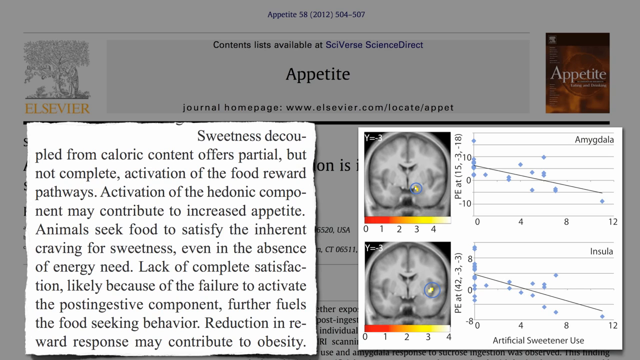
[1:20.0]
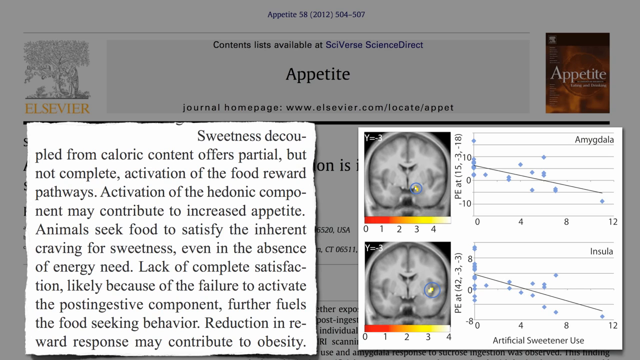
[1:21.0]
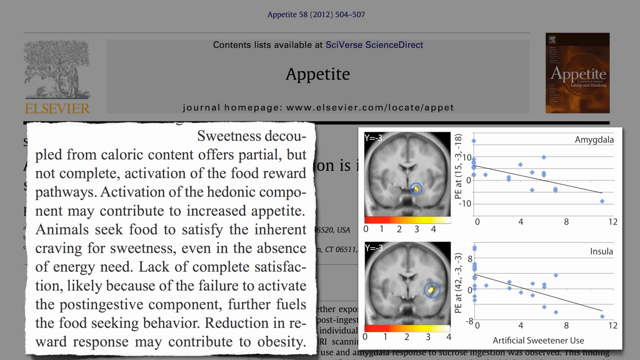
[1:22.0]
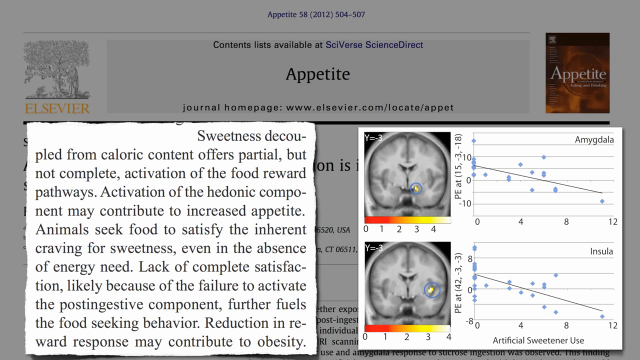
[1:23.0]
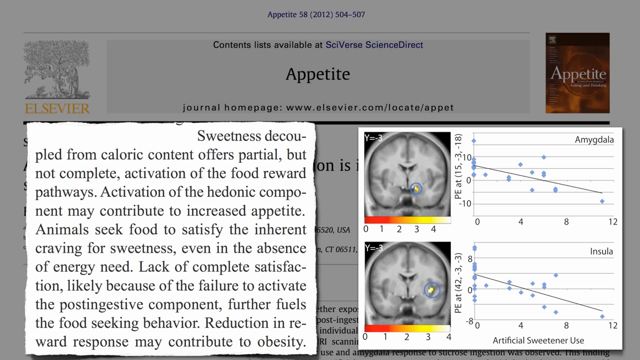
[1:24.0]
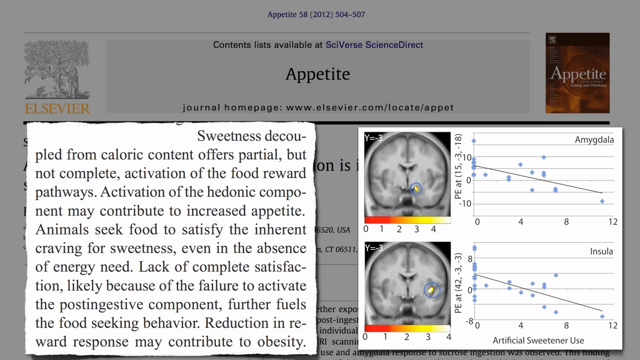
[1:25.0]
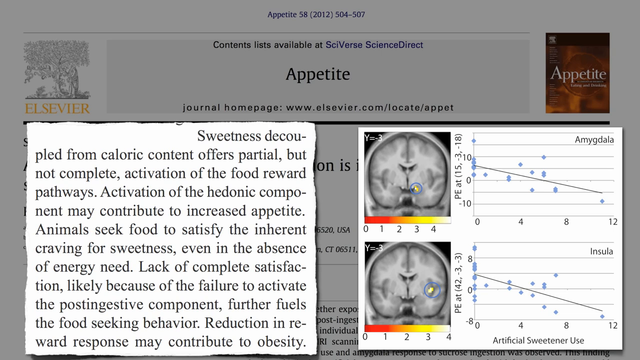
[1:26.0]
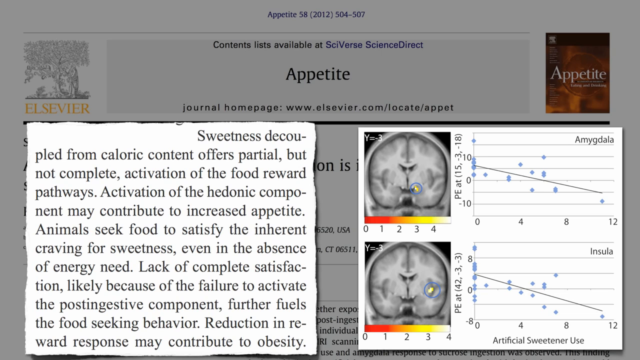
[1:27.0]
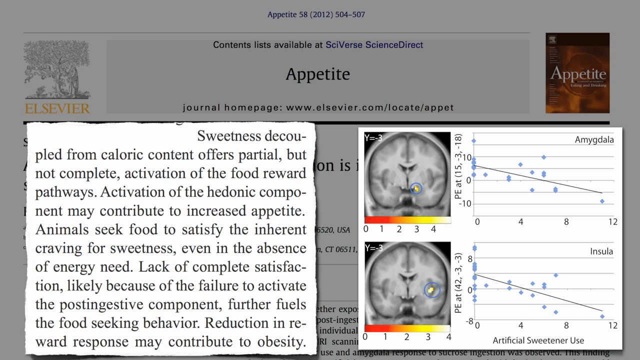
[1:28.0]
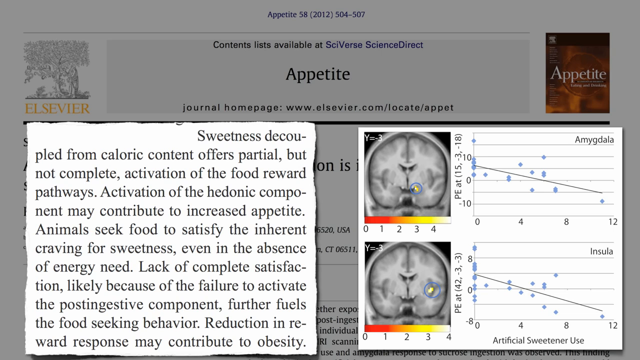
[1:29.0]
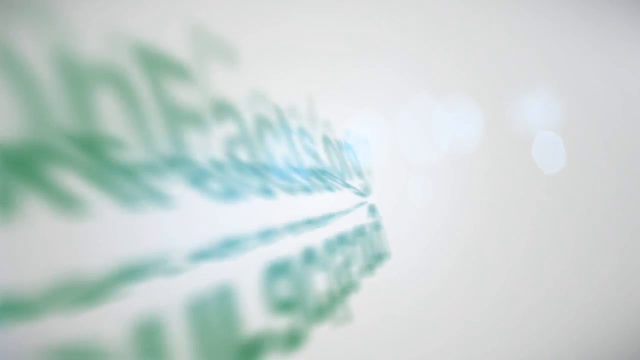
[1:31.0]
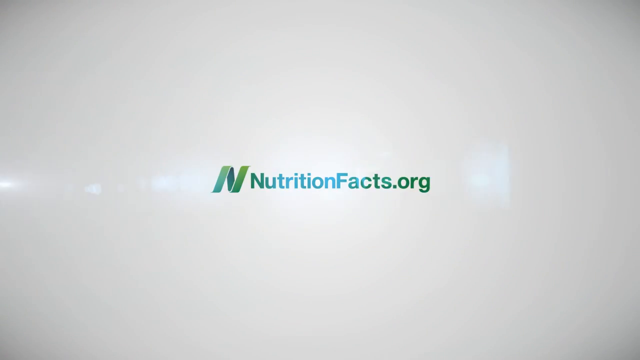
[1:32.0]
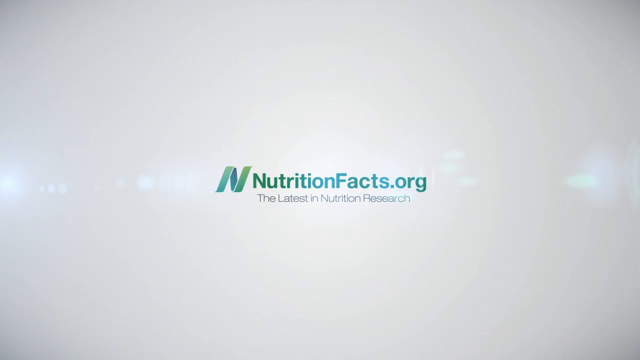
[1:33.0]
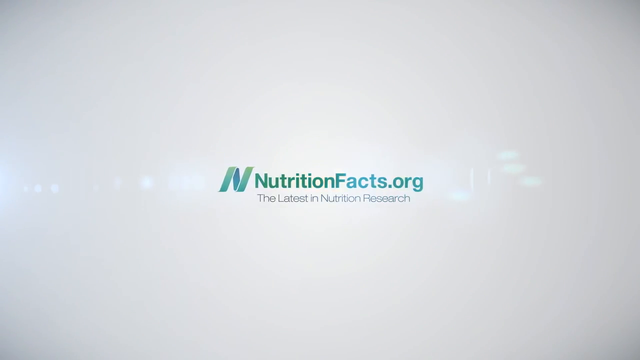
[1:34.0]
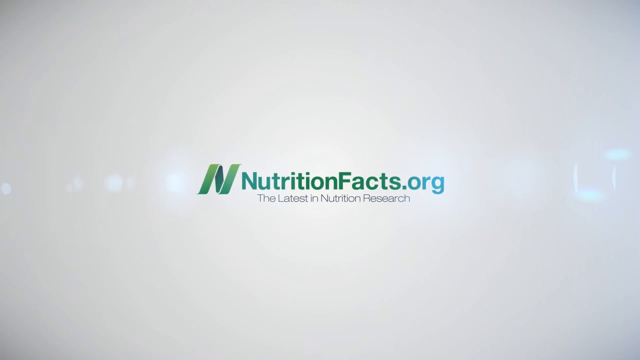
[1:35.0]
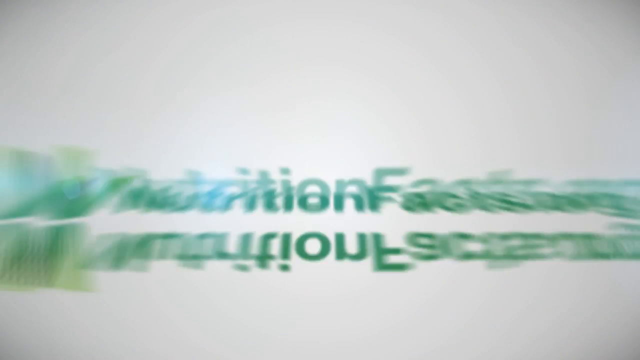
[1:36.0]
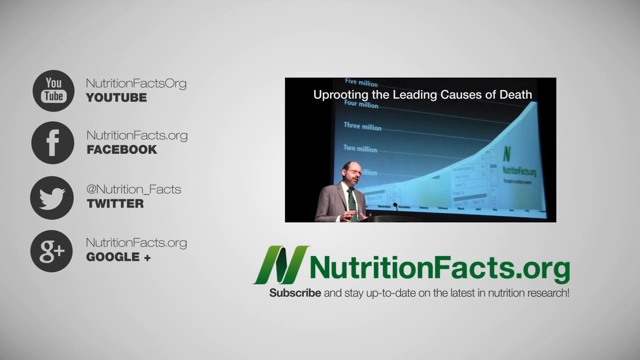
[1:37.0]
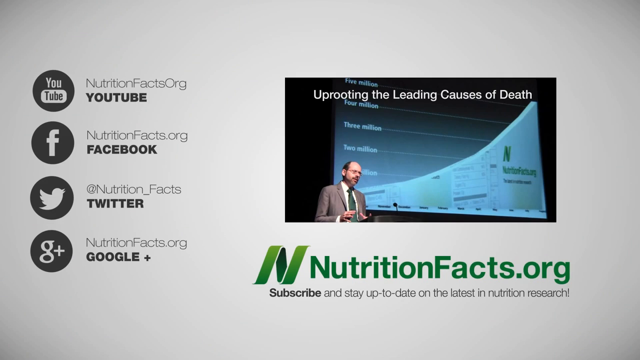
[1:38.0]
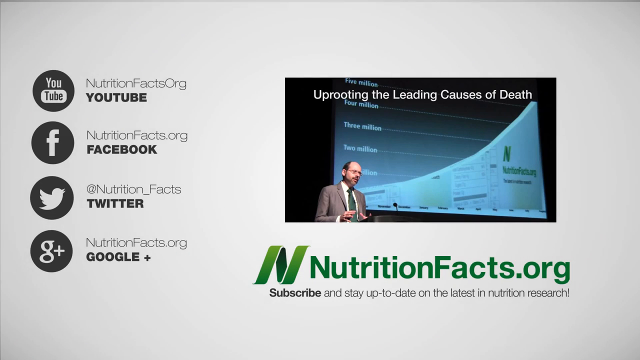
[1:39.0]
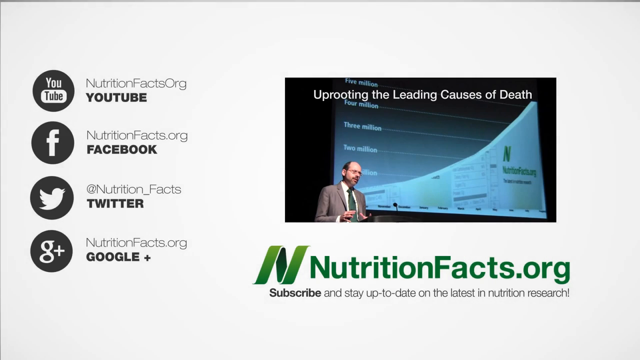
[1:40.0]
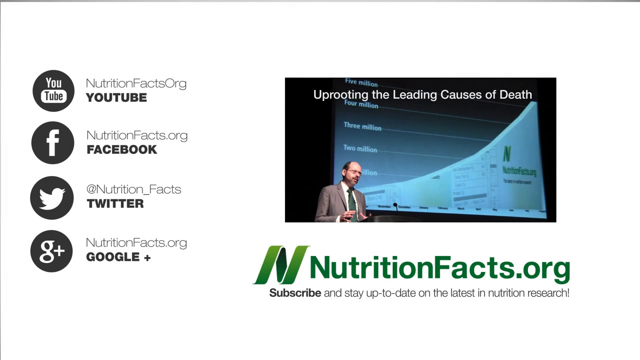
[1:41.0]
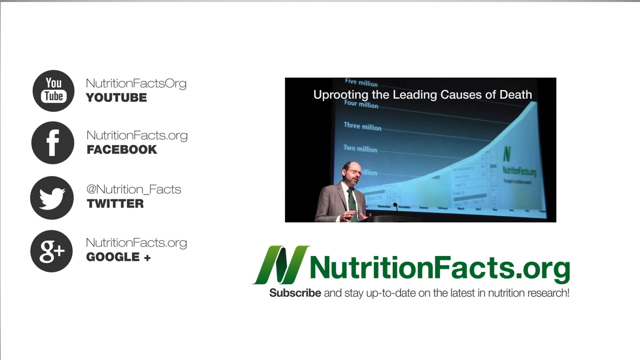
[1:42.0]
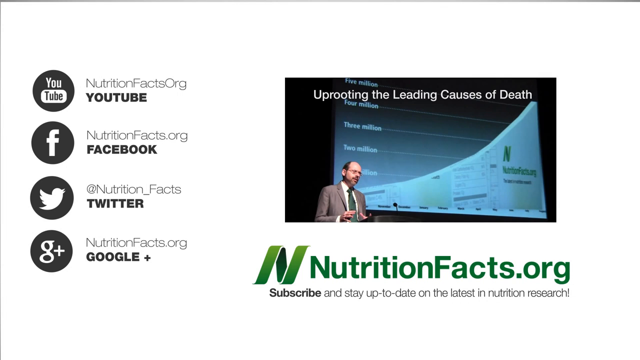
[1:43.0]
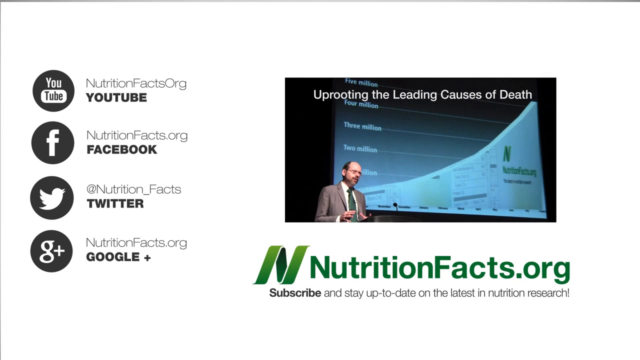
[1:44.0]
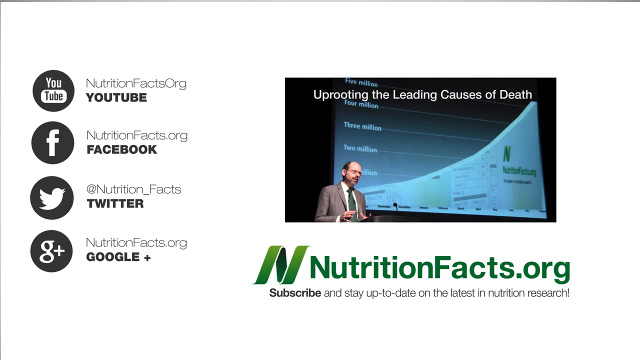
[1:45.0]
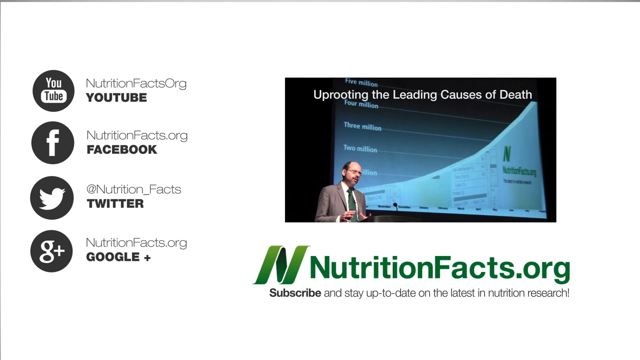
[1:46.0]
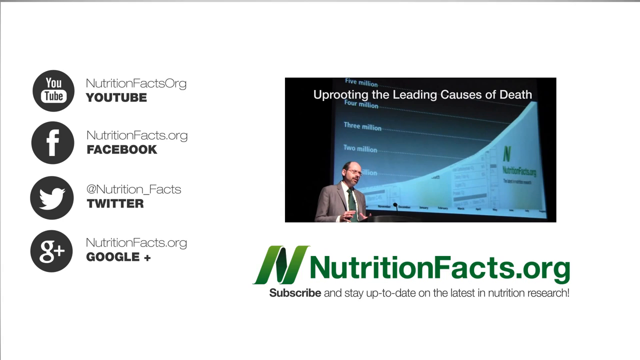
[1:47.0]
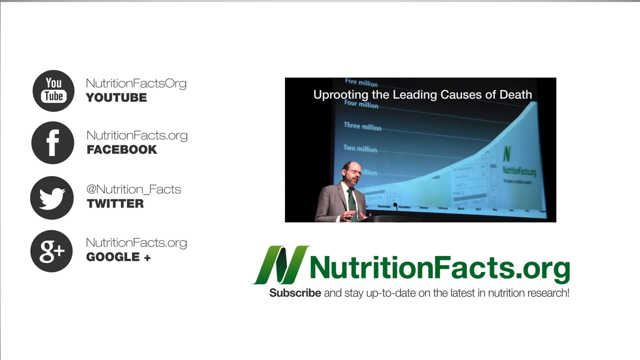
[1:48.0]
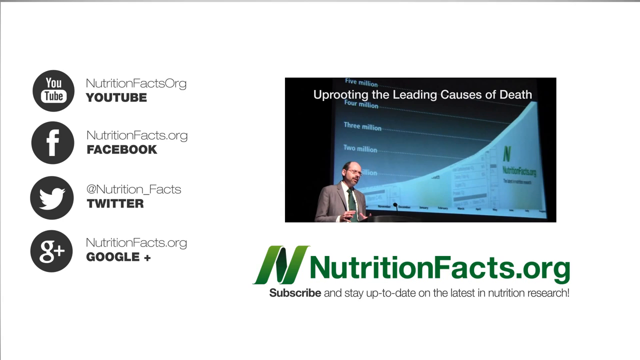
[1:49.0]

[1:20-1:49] Small clippings cut out of an article appear, one on the left and one on the right. The one on the left reads "coupled from caloric content offers partial but not complete activation of the food reward pathways. Activation of the hedonic component may contribute to increased appetite. Animals seek food to satisfy the inherent craving for sweetness, even in the absence of energy need. Lack of complete satisfaction, likely because of the failure to activate the" and then trails off with no more of the article to read. On the right is a chart showing the interior of the brain twice, at the top and bottom, as two different charts with graphs. The video ends with "NutritionFacts.org" in the center of the screen, with other illegible words written underneath it.